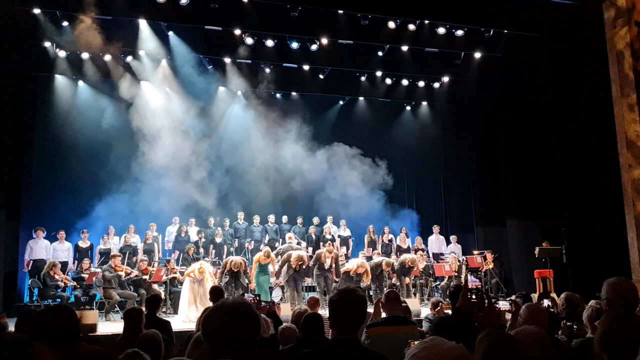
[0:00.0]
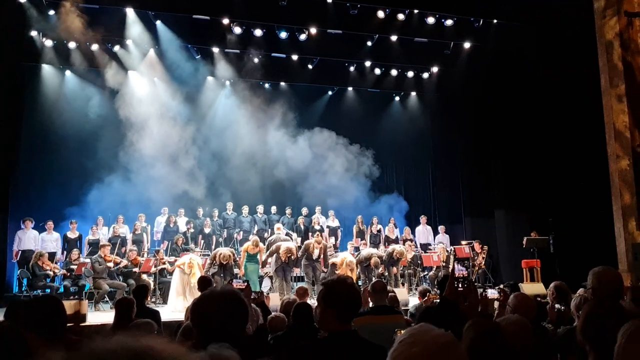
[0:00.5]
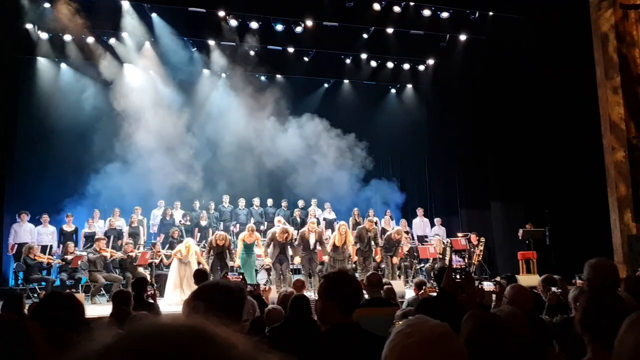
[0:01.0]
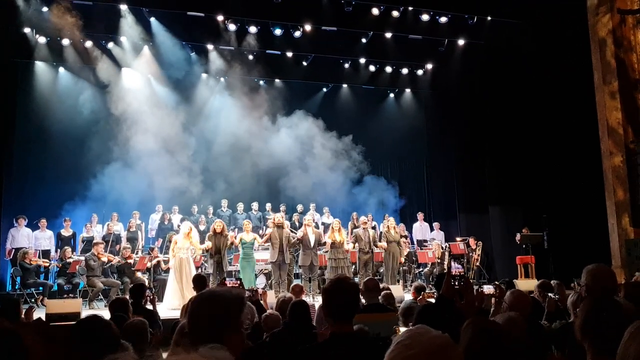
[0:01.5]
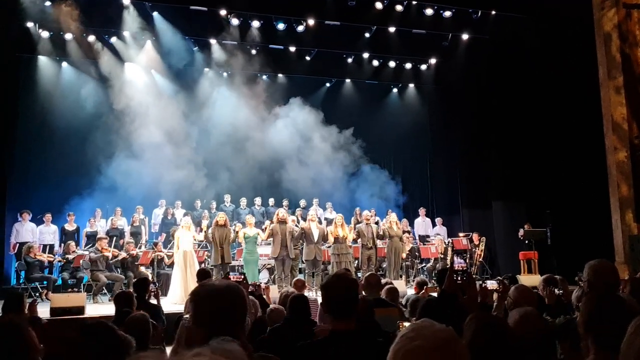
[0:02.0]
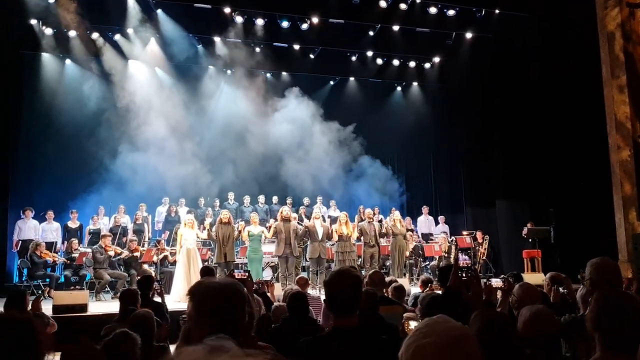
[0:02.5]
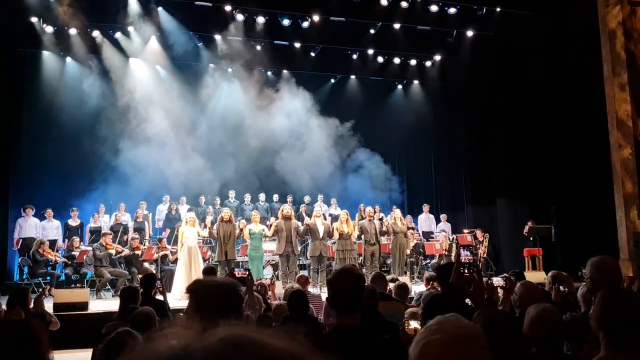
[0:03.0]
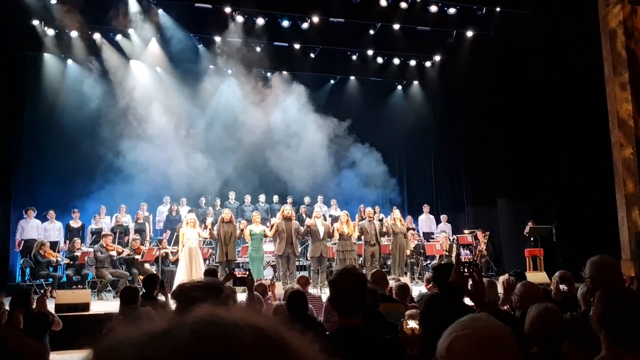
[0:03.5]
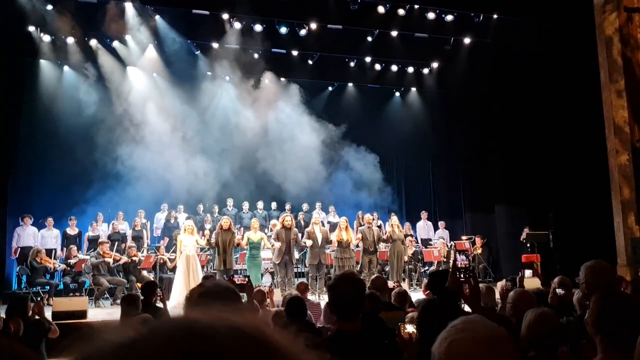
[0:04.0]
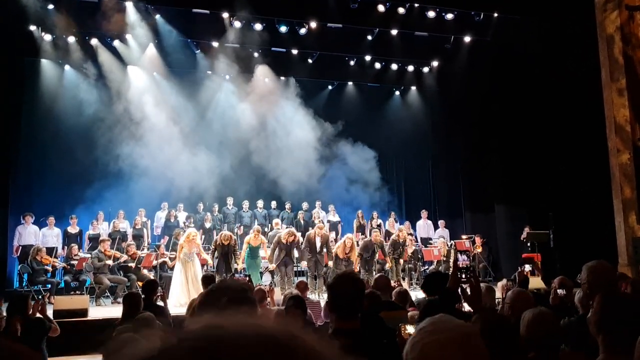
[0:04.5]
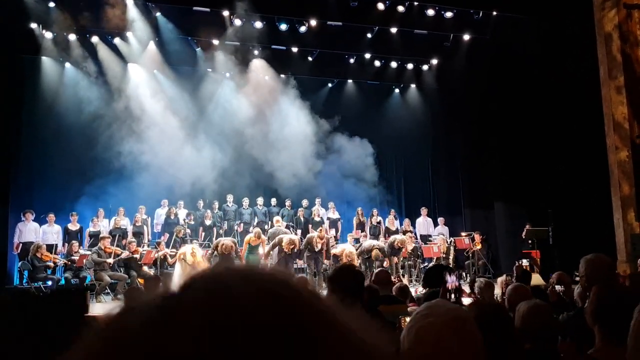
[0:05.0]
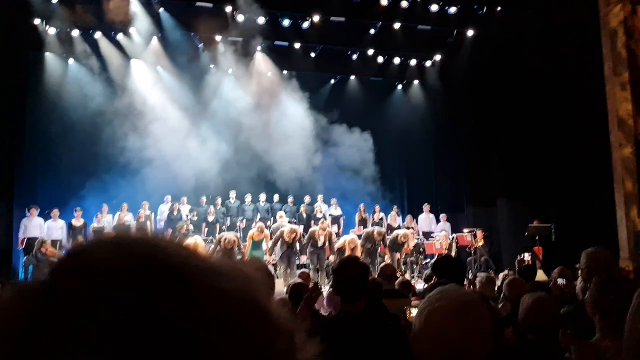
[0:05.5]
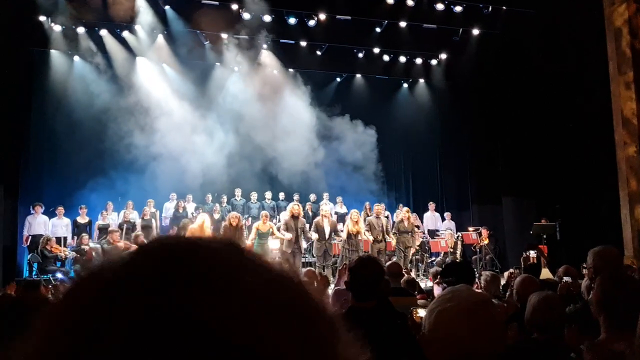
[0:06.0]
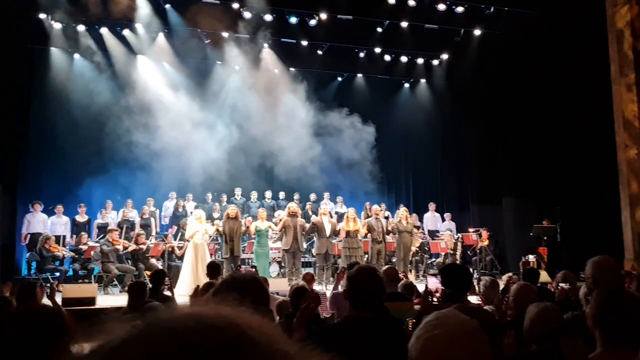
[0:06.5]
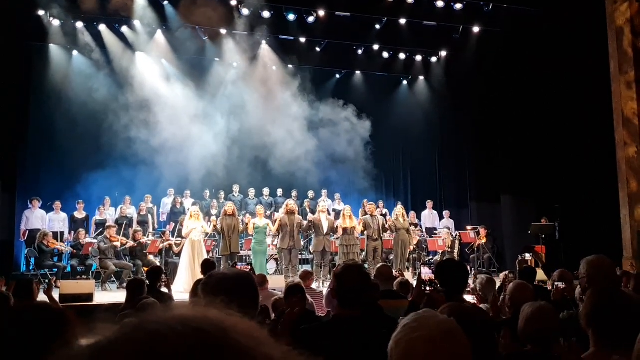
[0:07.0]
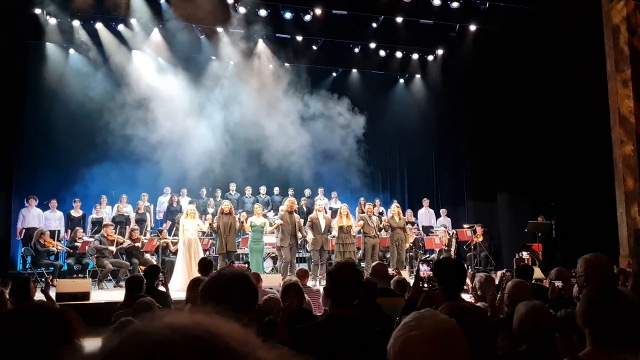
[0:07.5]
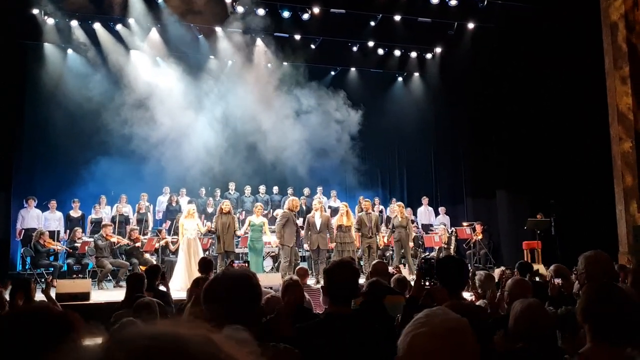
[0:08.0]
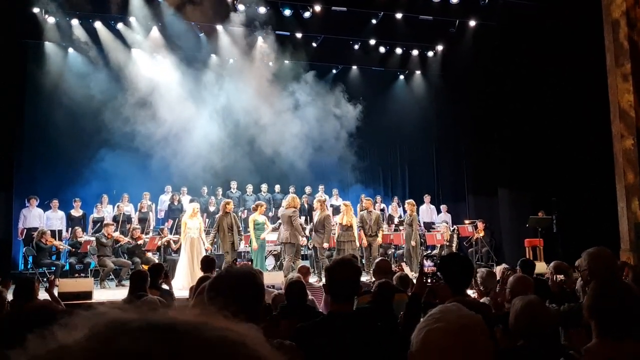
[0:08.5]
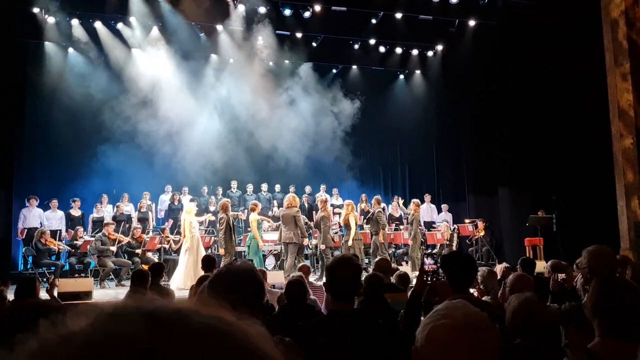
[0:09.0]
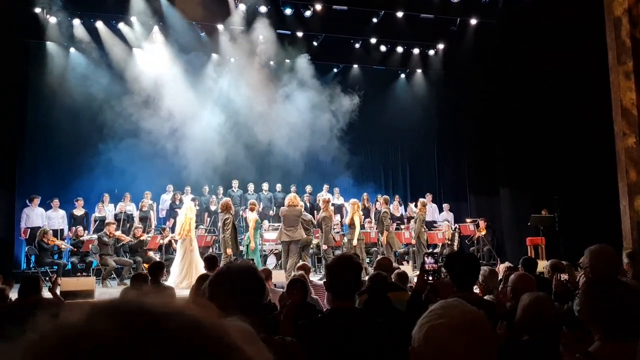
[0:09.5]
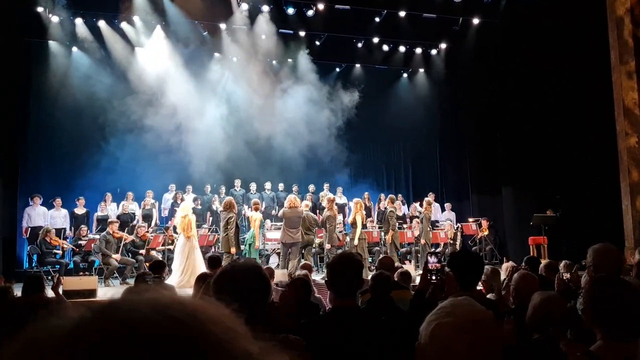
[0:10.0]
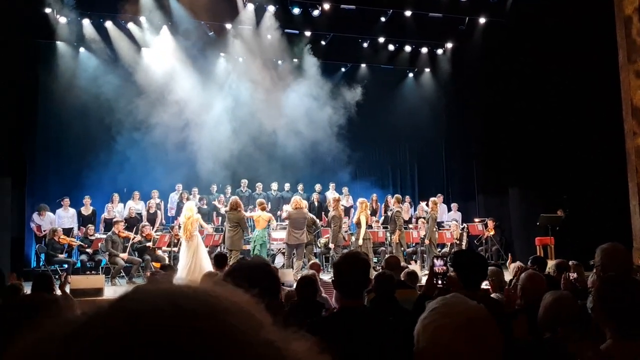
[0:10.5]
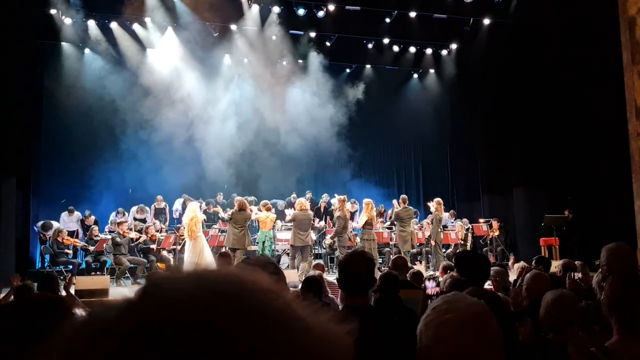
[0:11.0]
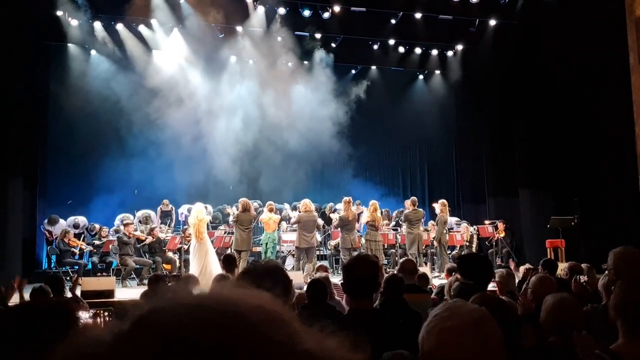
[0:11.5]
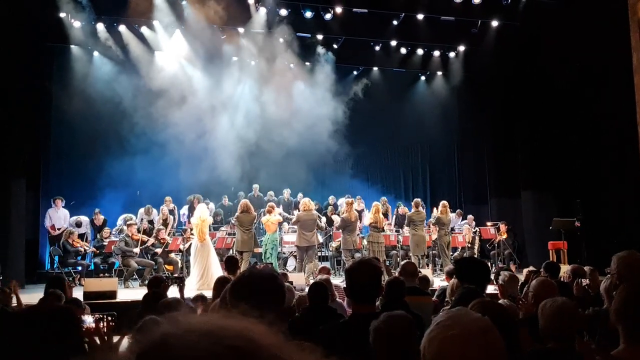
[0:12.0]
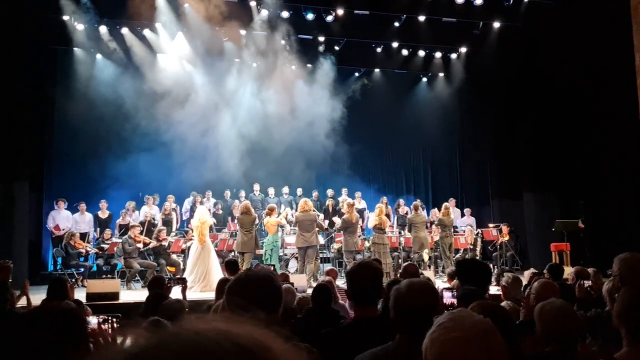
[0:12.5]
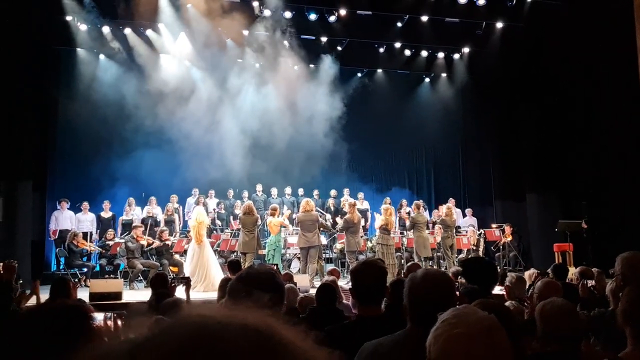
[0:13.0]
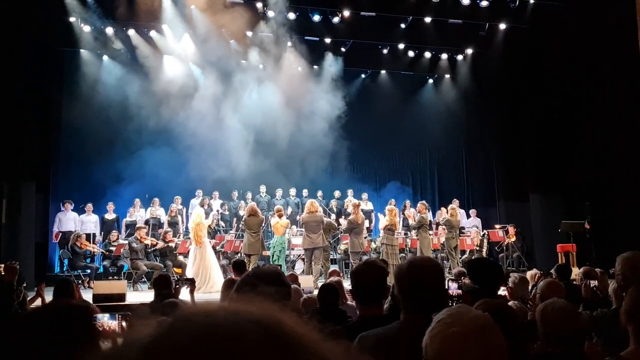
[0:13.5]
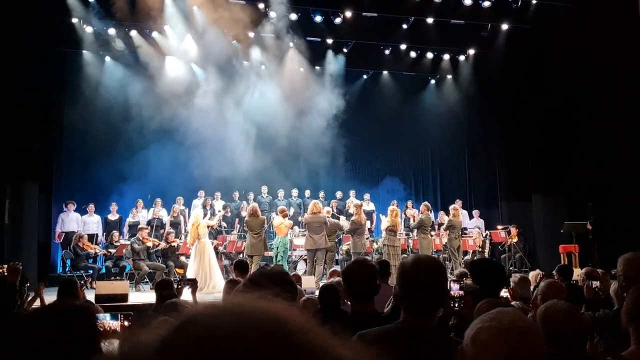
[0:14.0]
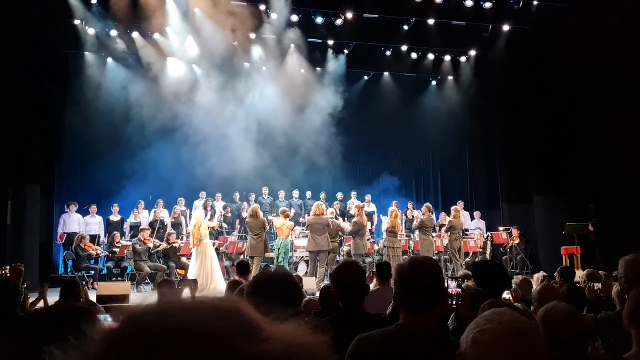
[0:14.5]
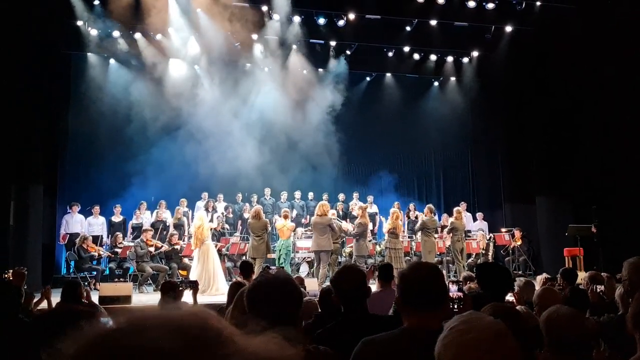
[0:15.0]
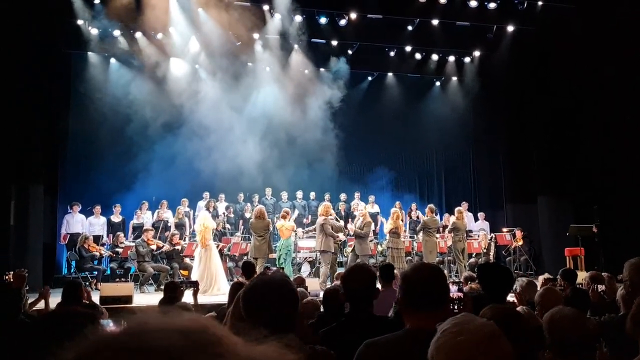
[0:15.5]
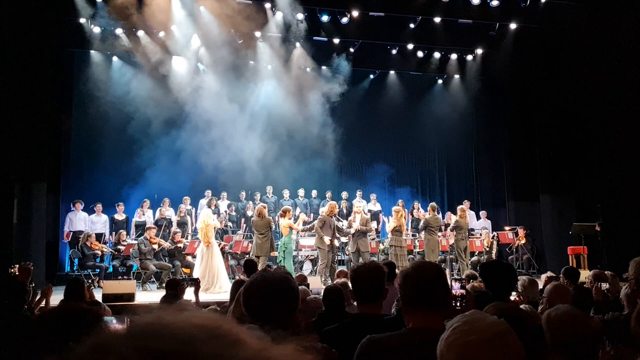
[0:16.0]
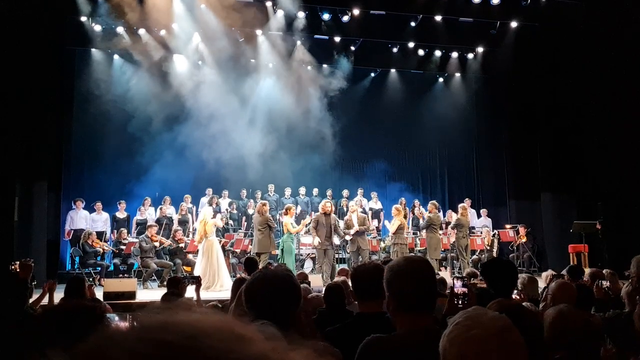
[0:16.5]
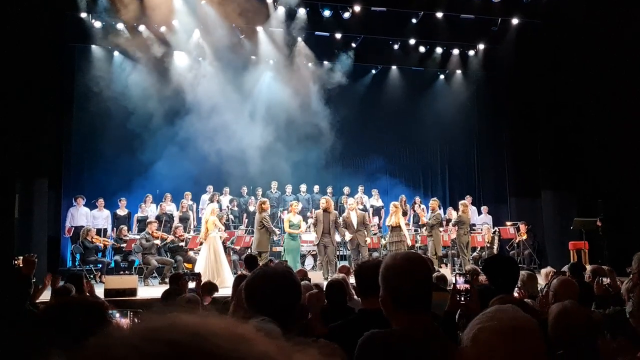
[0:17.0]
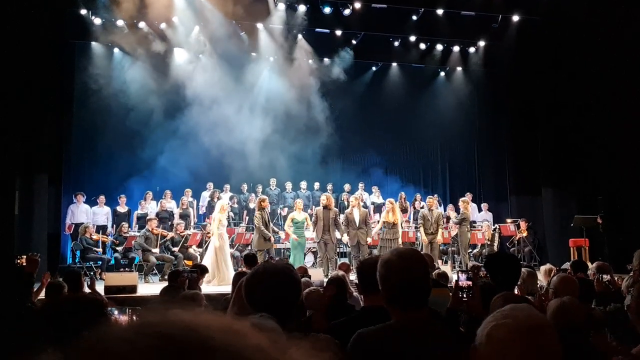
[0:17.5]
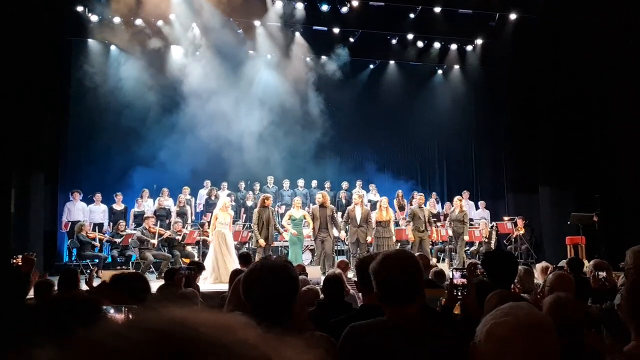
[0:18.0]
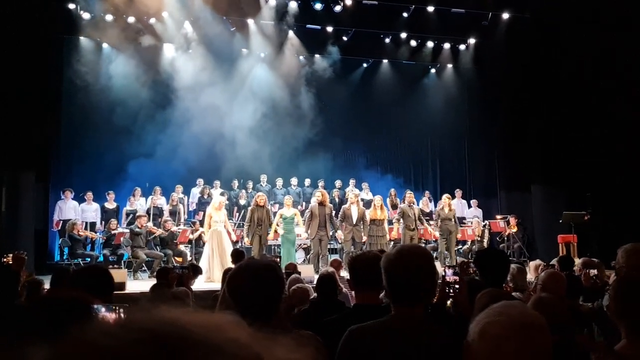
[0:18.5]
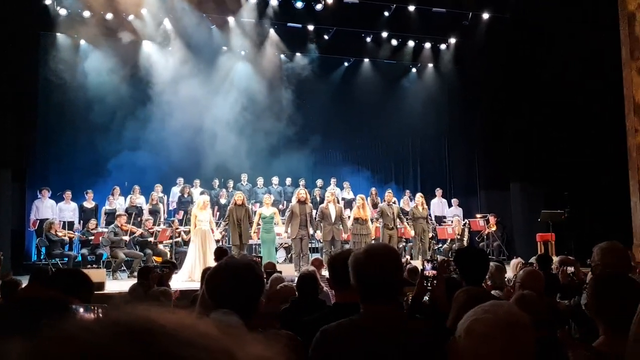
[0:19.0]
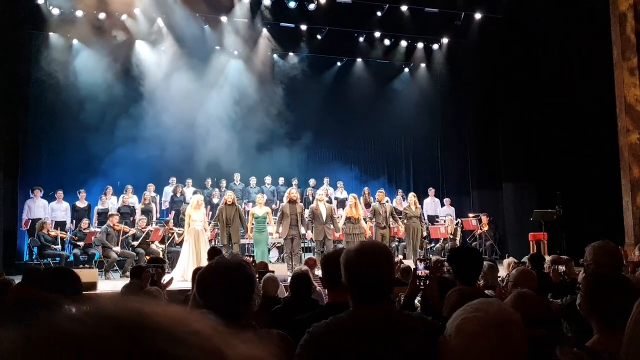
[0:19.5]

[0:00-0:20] A performance of some kind is ending, and the audience is recognizing the various performers. There are musicians, what looks like a string section, and what looks like a choir of men and women, along with what are possibly soloists lining up at the front and taking a bow. One of them, maybe in the center, is probably the director or conductor. It looks like probably a classical music event with an orchestra and choir, though possibly not. There are lights and smoke on the stage, and the musicians are dressed in black and white.